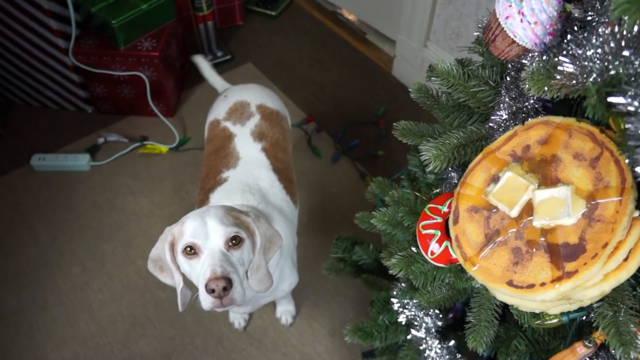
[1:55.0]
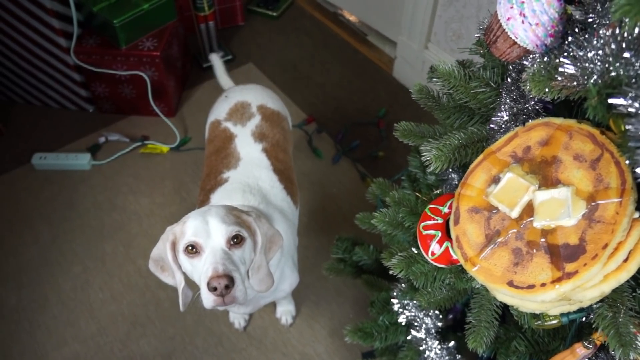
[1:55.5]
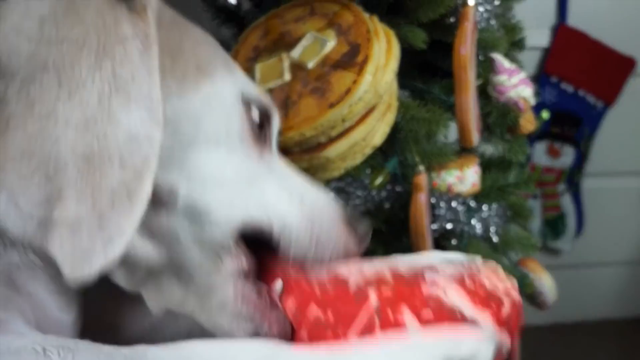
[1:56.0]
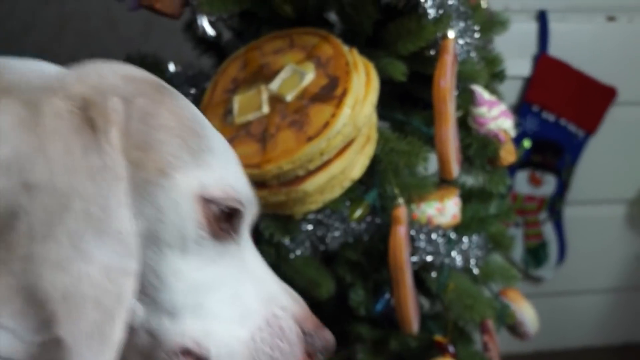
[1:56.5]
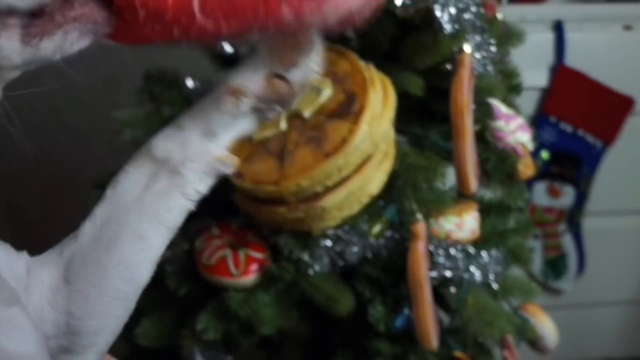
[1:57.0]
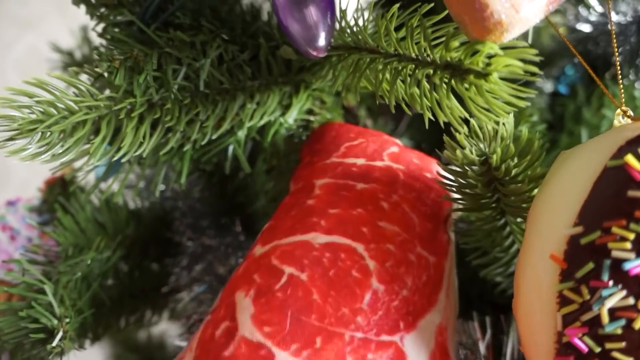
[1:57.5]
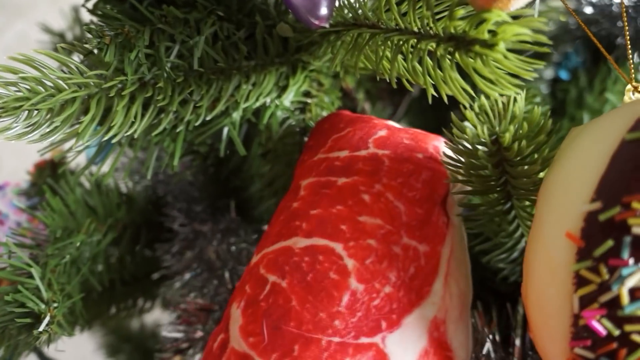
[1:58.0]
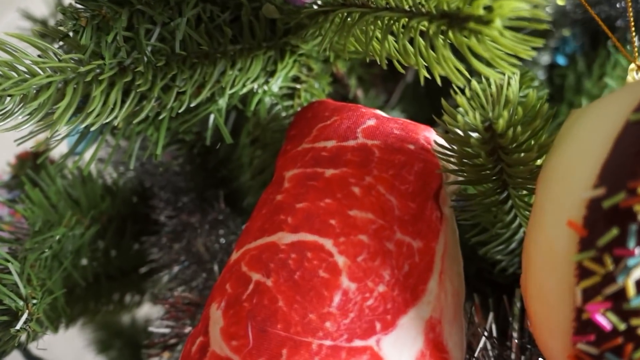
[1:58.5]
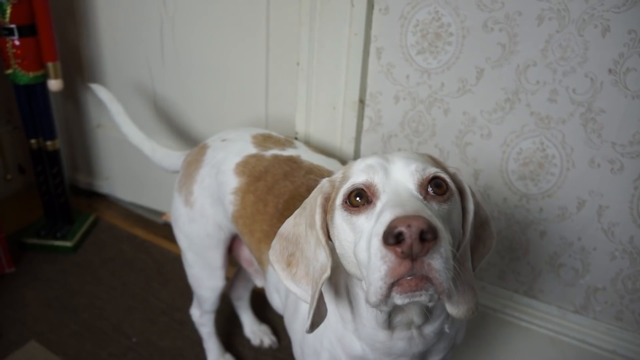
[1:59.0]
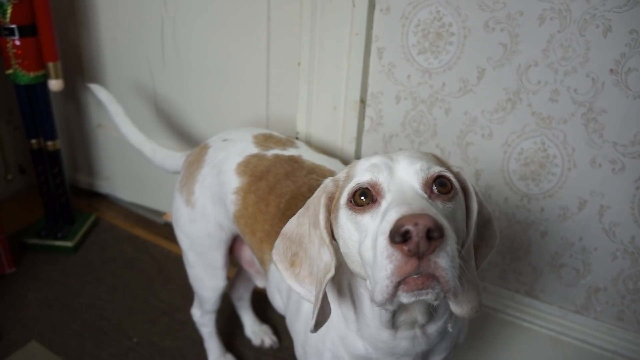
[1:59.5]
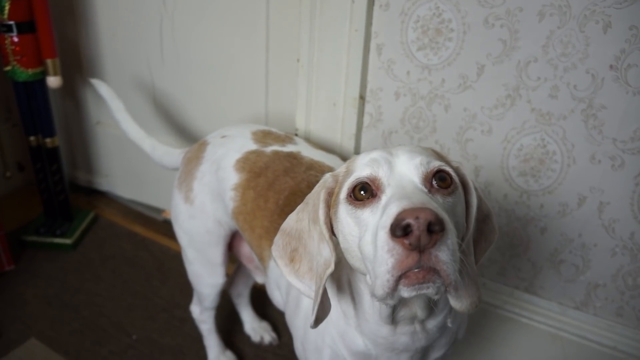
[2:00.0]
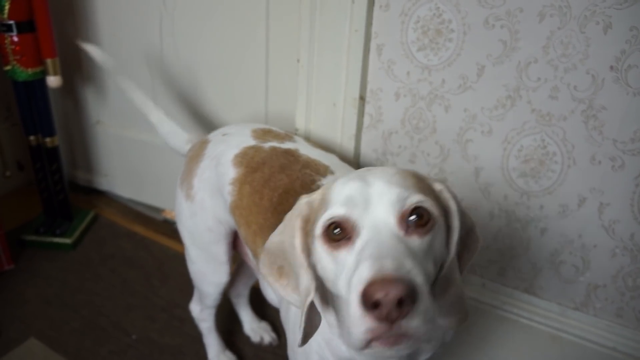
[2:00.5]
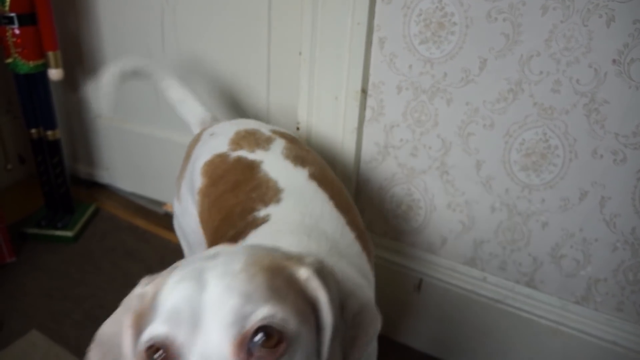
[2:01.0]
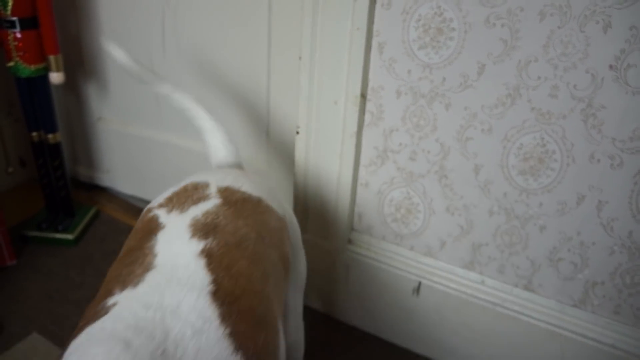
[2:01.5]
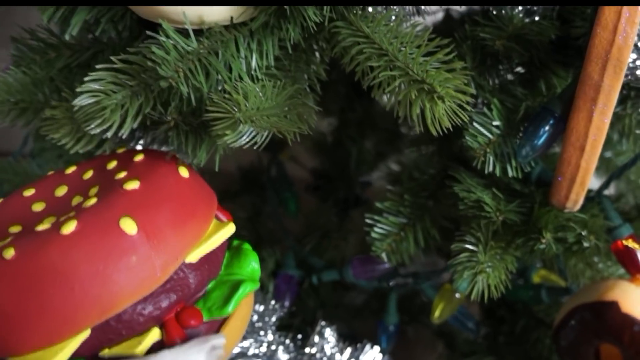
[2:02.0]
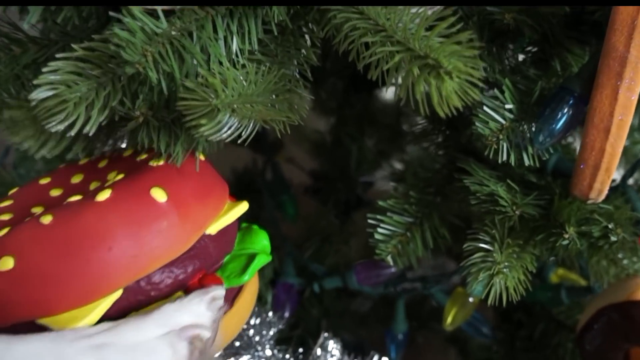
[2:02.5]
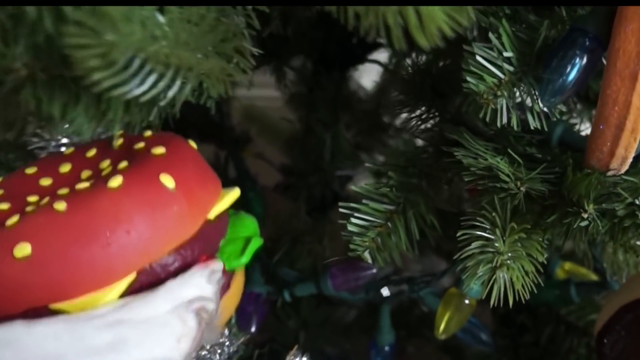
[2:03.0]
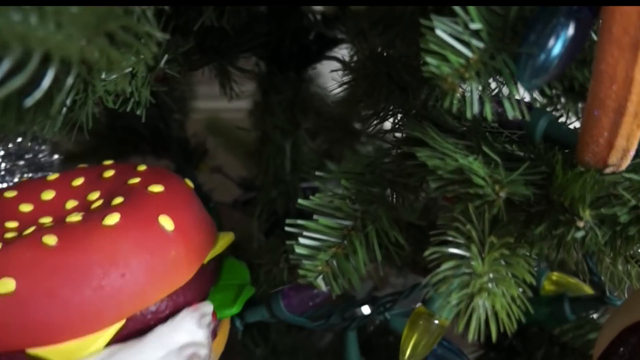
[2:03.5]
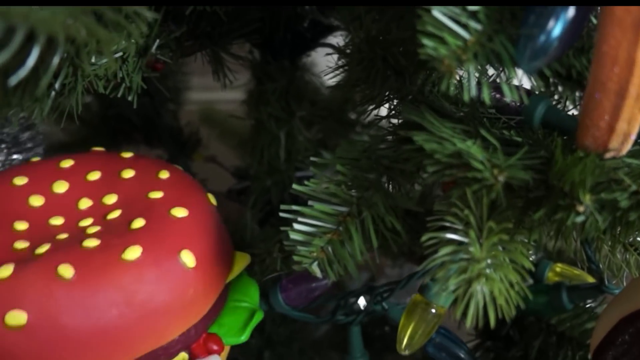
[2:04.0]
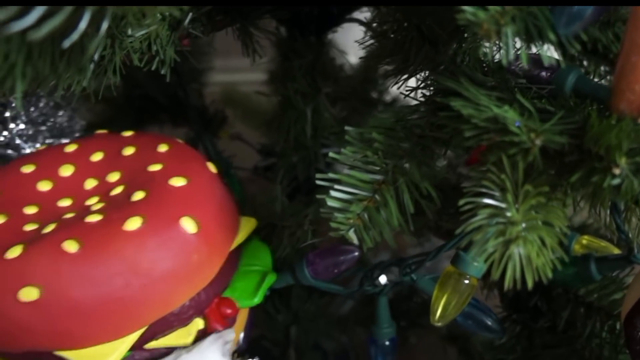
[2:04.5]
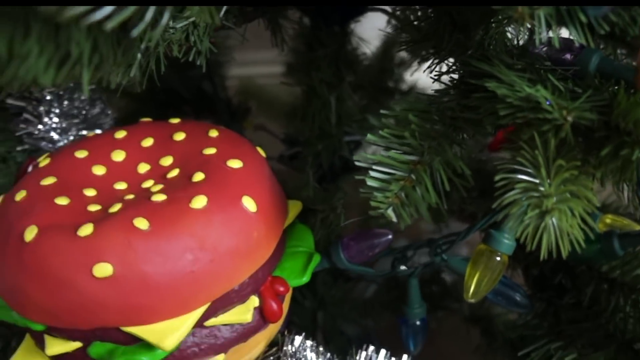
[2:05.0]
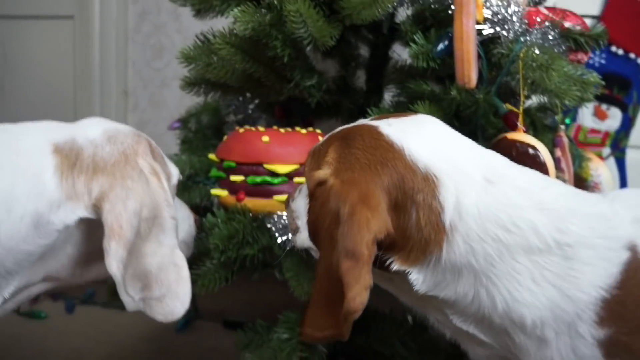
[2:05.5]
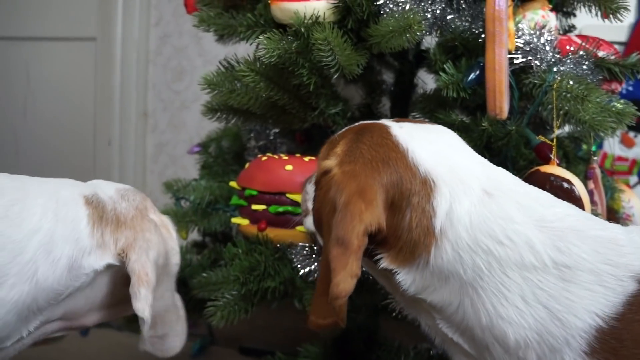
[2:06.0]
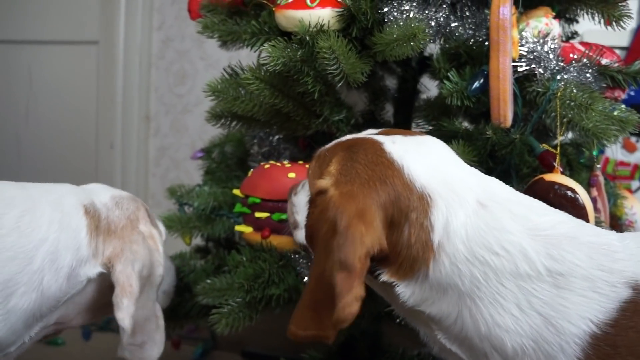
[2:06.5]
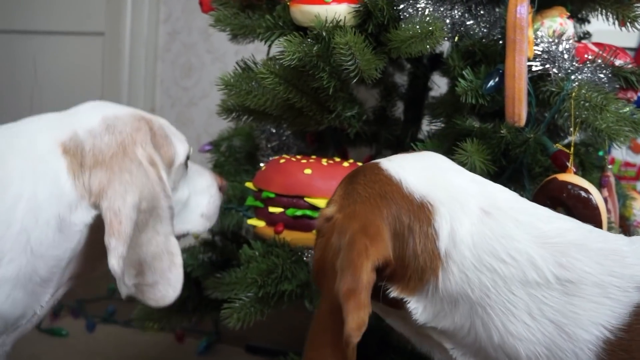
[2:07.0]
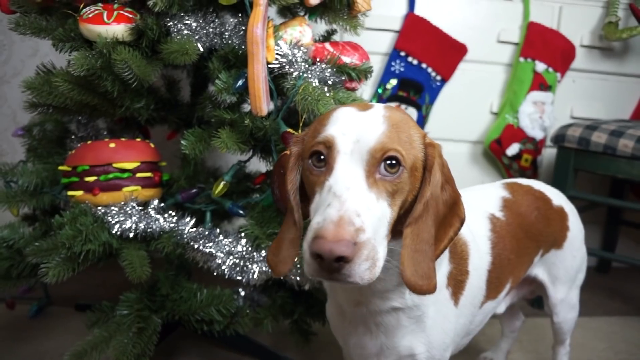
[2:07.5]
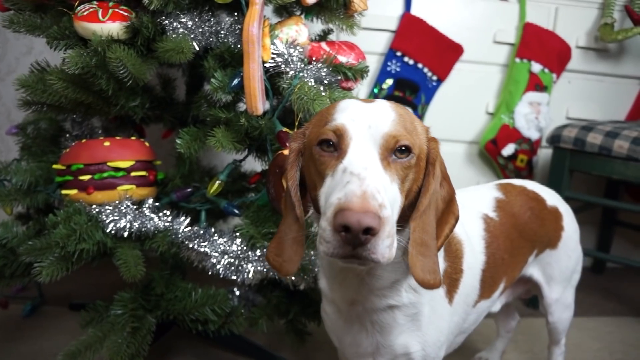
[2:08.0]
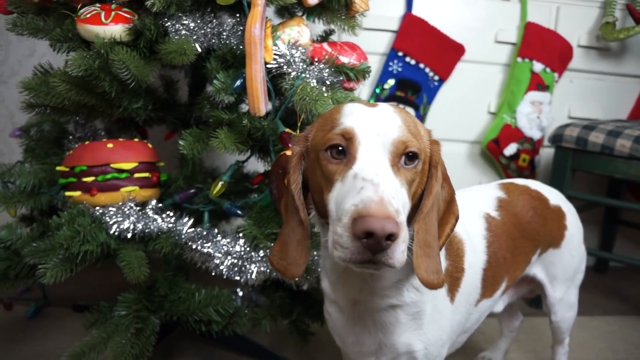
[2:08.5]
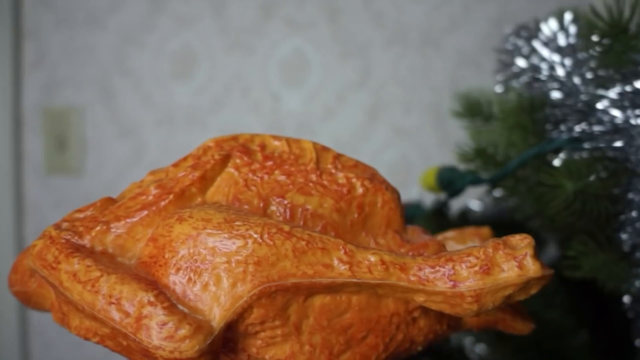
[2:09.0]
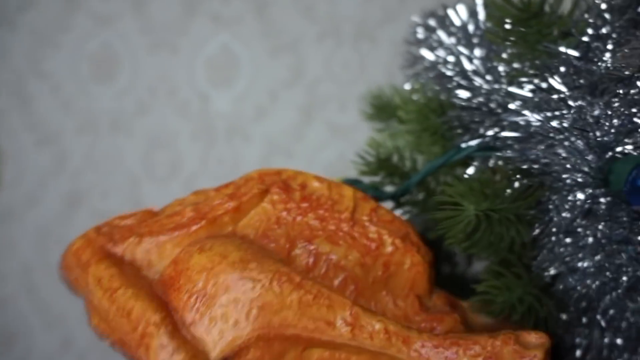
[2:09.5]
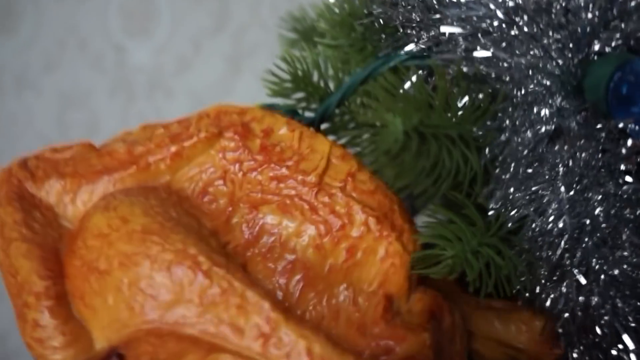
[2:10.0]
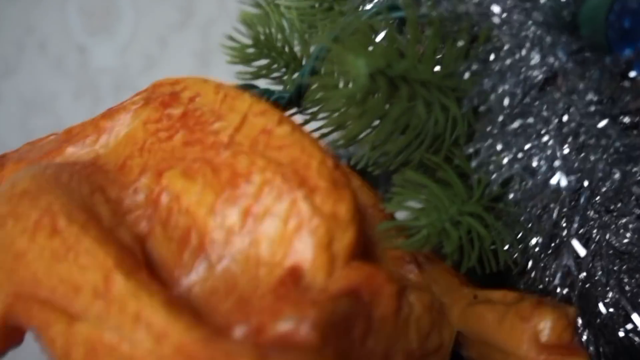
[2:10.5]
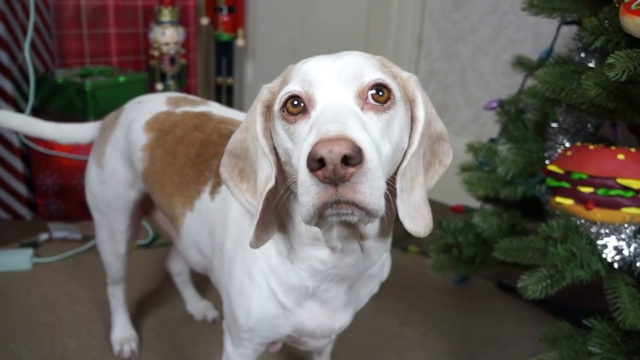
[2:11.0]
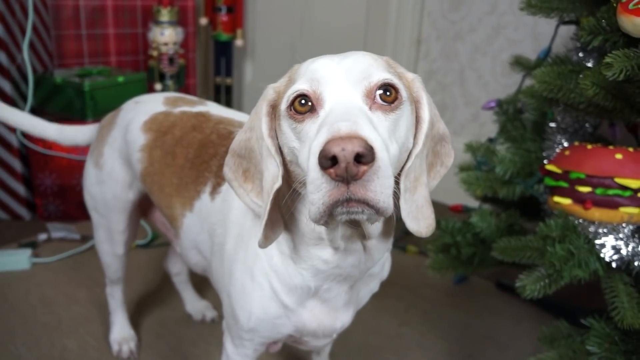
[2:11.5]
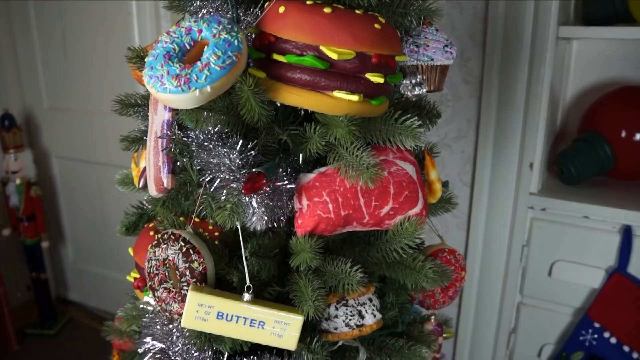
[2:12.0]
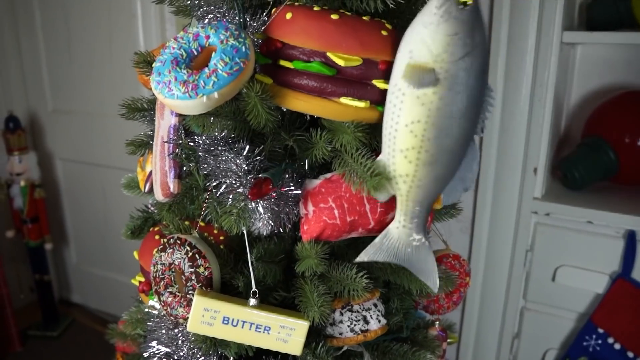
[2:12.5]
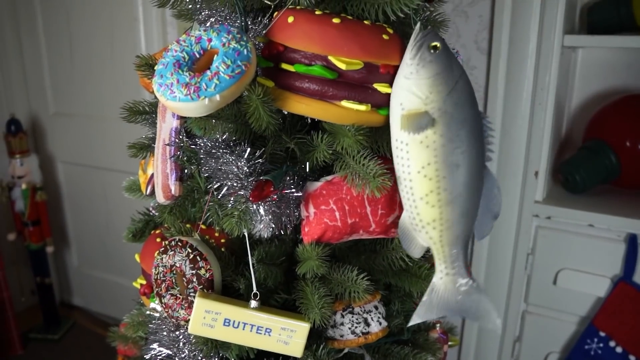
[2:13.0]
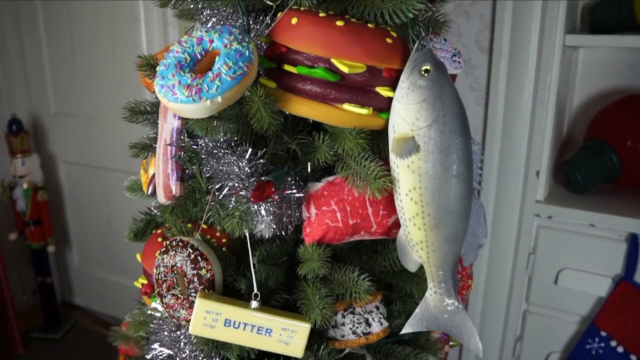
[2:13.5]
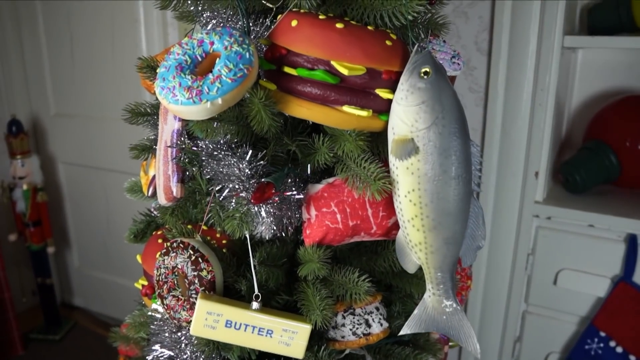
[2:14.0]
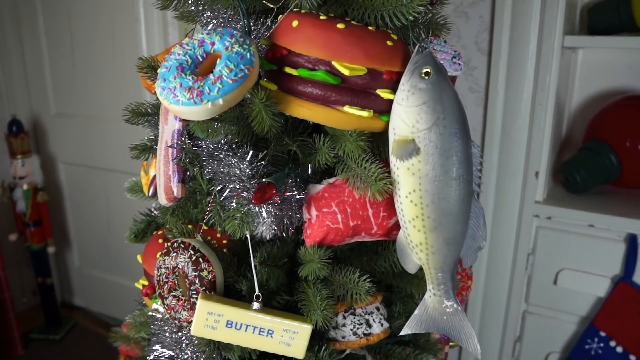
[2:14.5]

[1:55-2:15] The dog adds more food ornaments to the tree: a whole steak, a hamburger or cheeseburger ornament at the bottom, which the dogs lick, something like a turkey ornament, and a whole fish ornament hung on the top. There are also little toys. Finally, a slice of pizza is put on the tree.